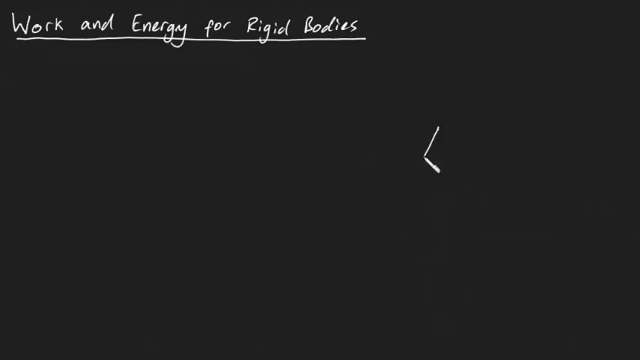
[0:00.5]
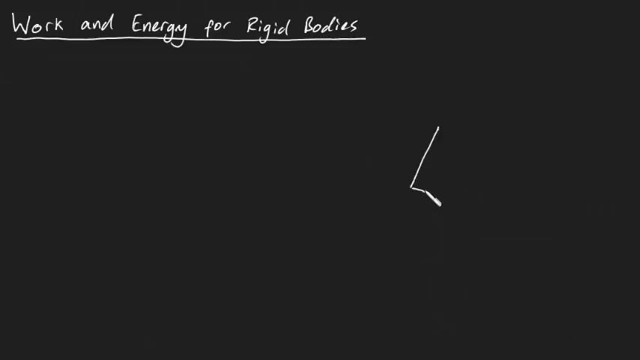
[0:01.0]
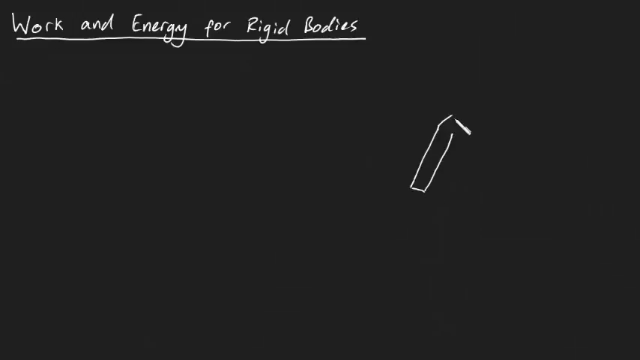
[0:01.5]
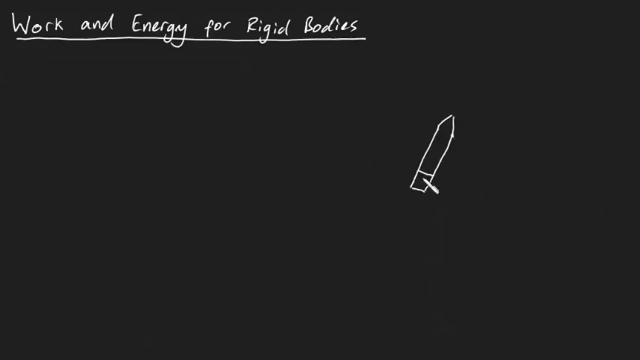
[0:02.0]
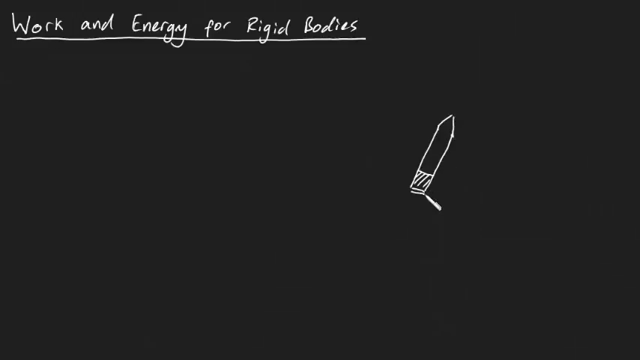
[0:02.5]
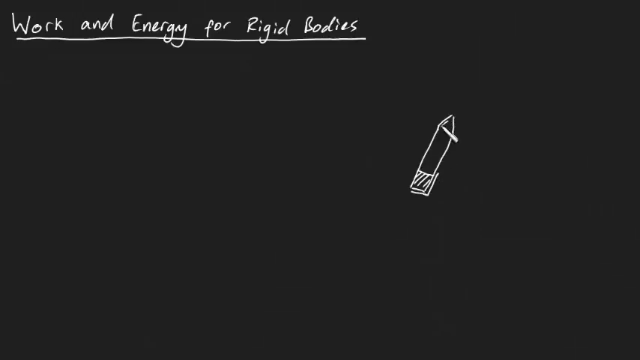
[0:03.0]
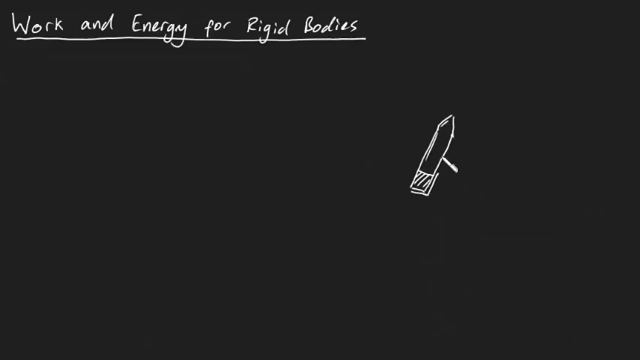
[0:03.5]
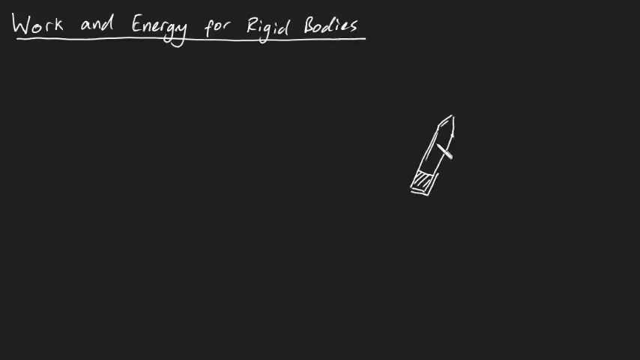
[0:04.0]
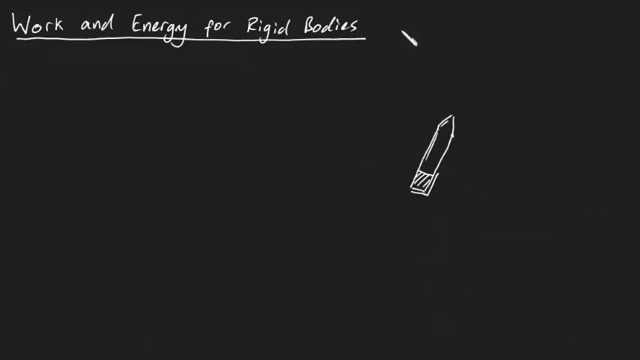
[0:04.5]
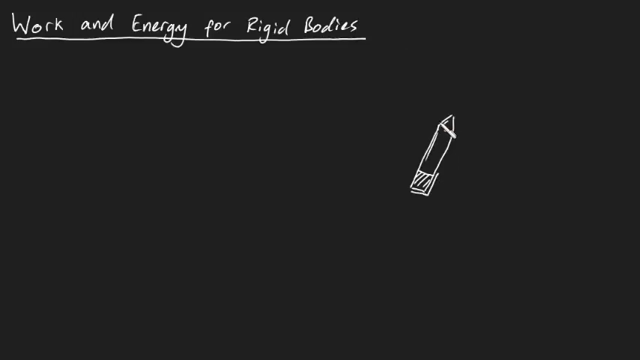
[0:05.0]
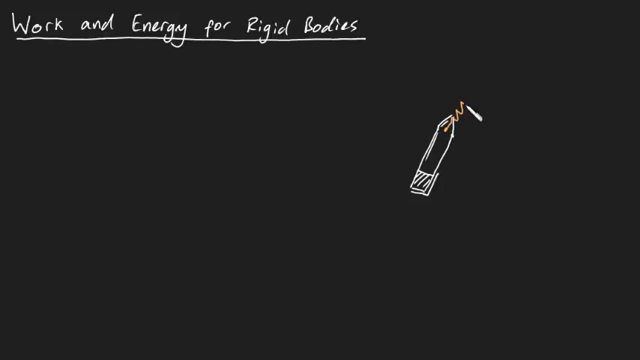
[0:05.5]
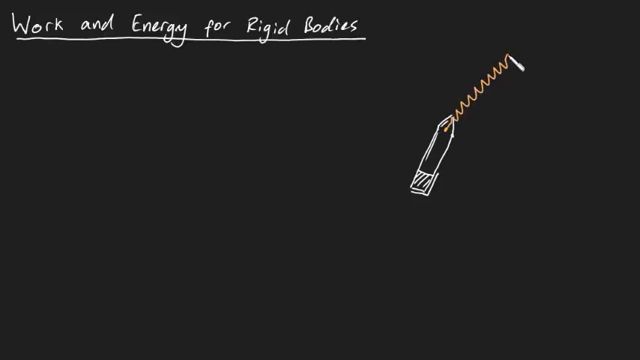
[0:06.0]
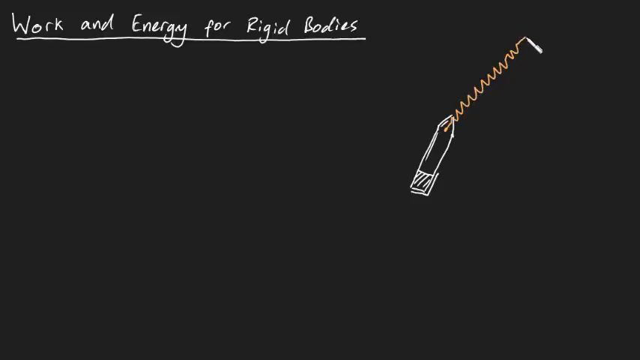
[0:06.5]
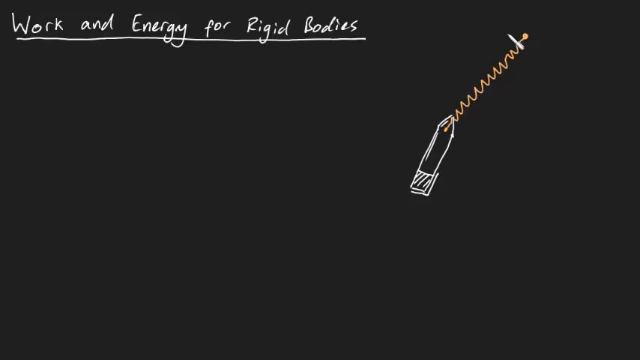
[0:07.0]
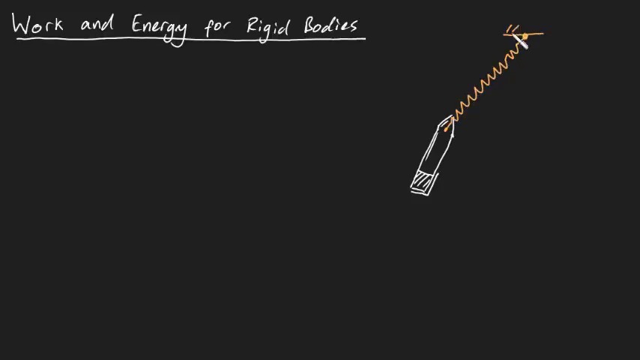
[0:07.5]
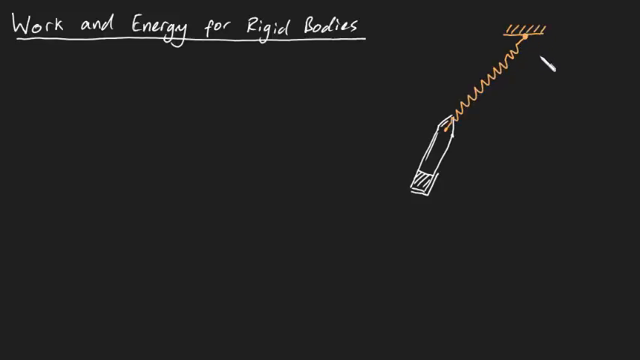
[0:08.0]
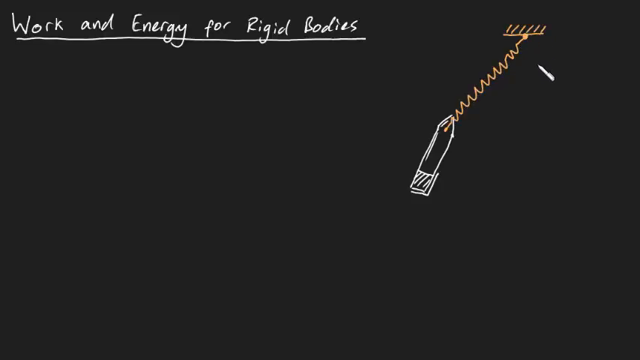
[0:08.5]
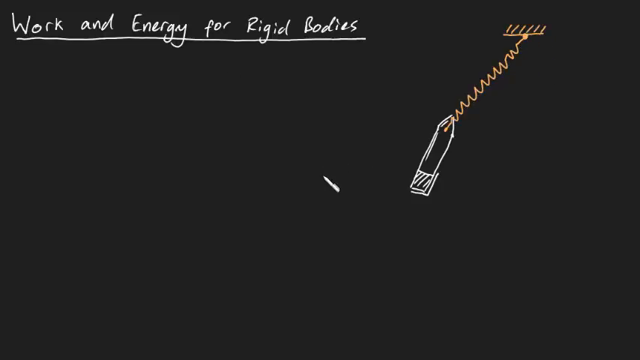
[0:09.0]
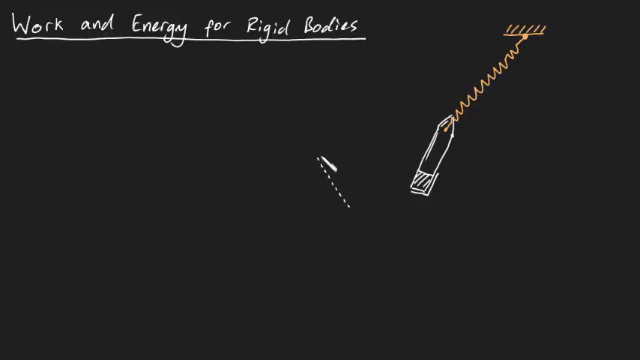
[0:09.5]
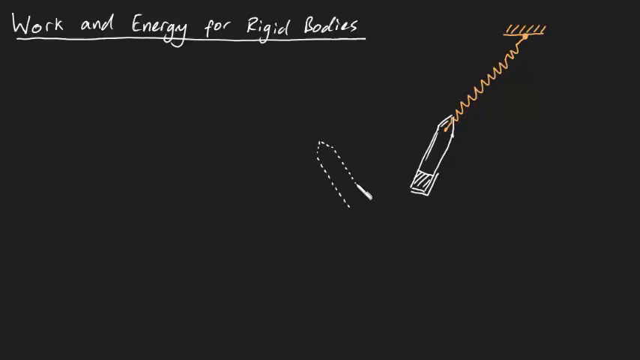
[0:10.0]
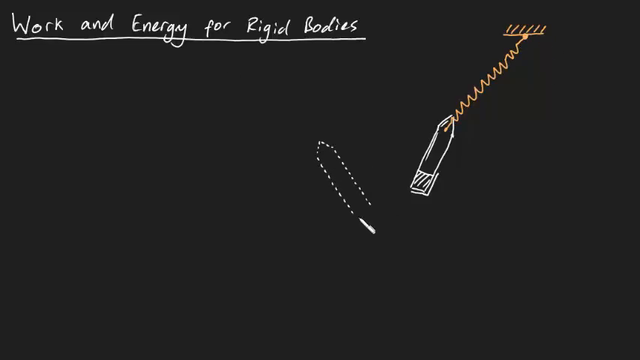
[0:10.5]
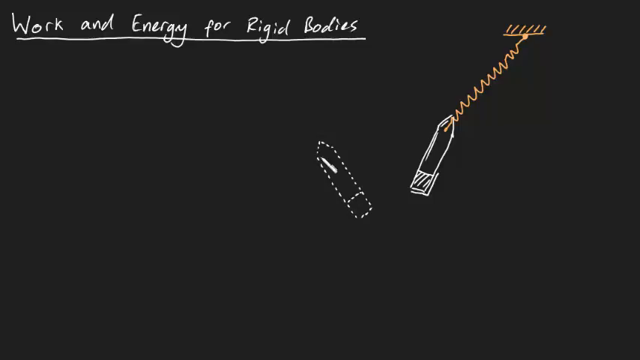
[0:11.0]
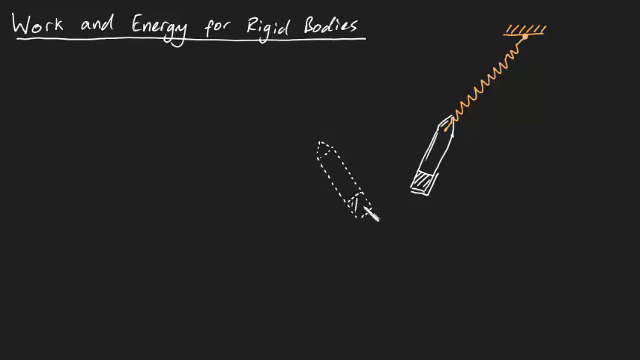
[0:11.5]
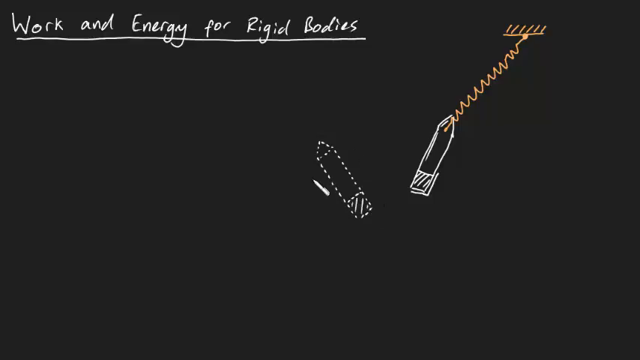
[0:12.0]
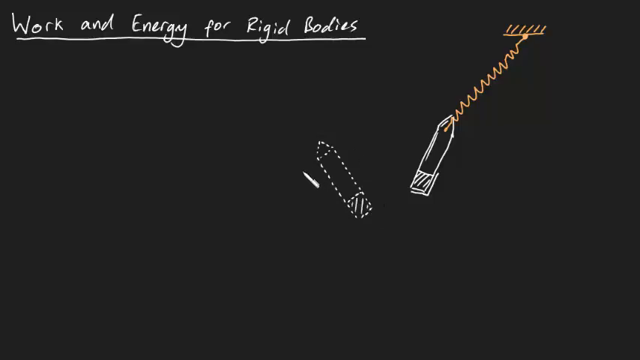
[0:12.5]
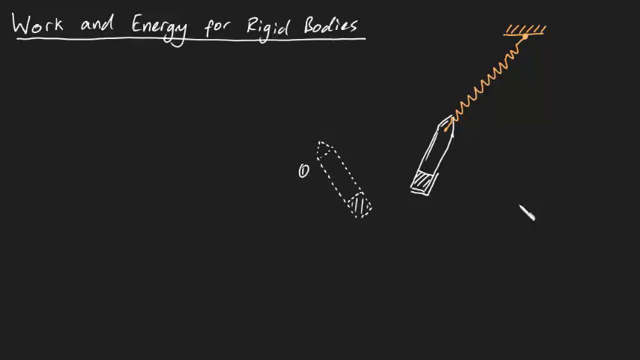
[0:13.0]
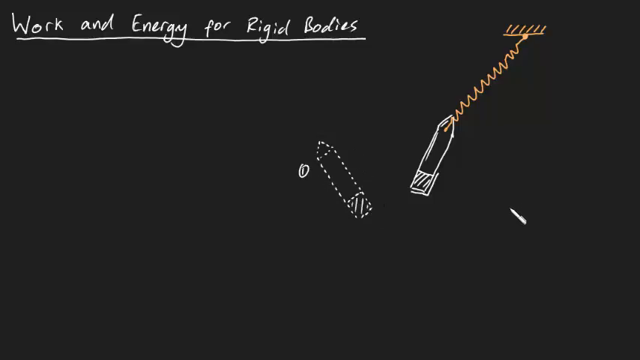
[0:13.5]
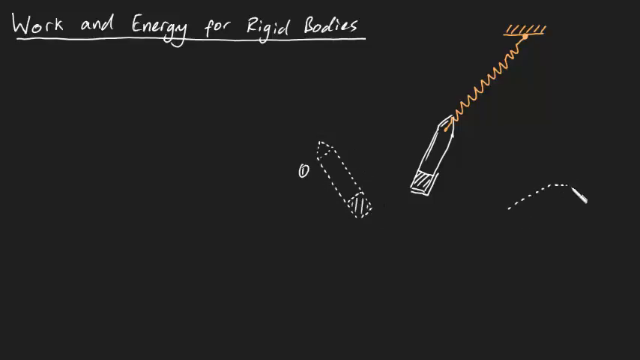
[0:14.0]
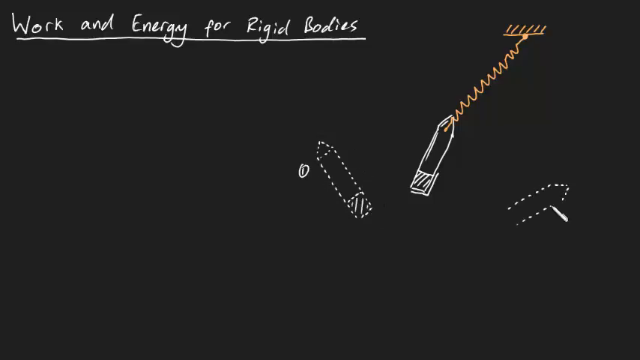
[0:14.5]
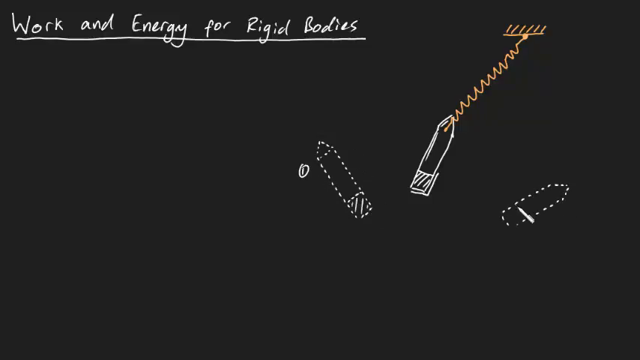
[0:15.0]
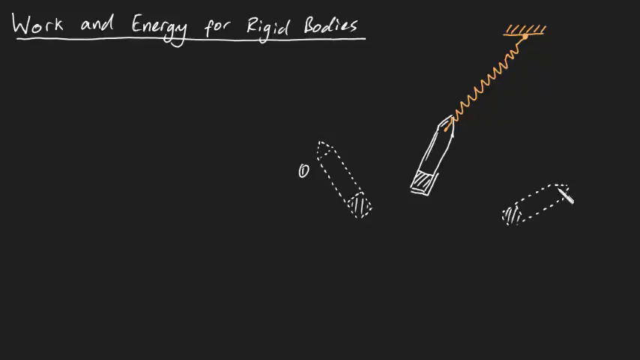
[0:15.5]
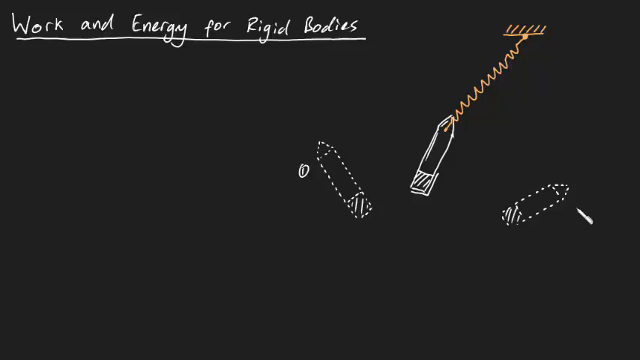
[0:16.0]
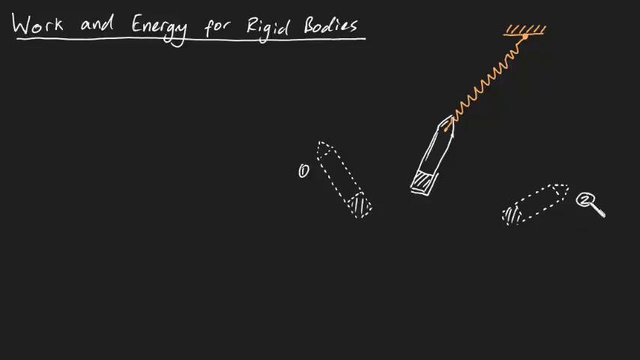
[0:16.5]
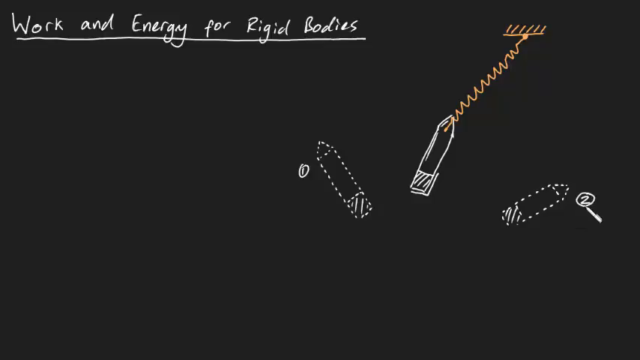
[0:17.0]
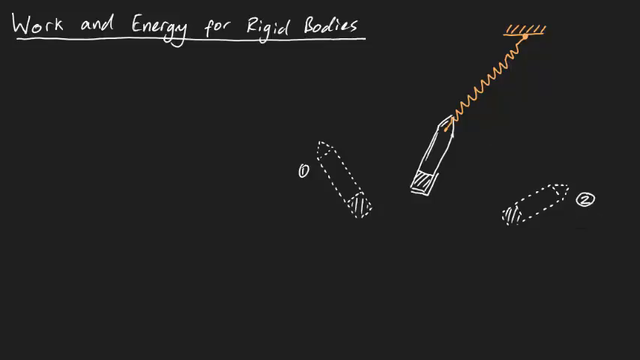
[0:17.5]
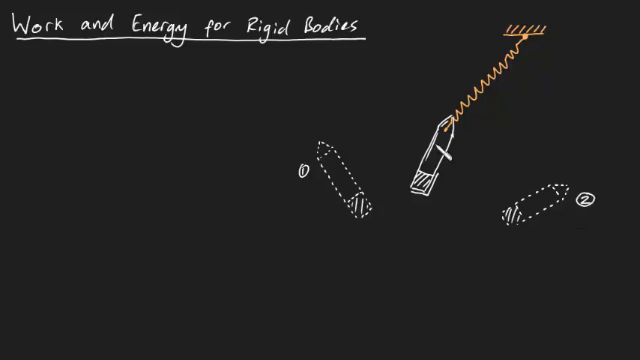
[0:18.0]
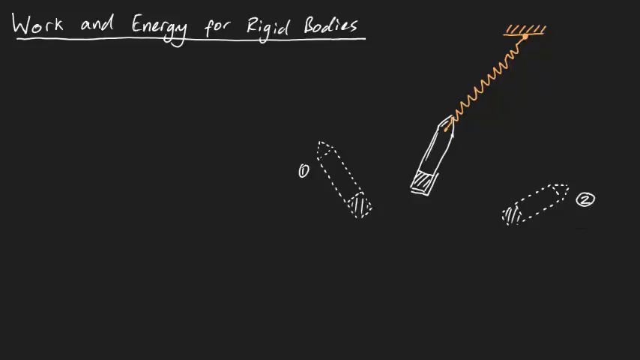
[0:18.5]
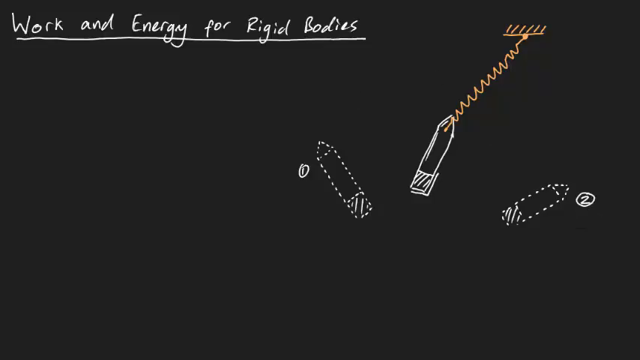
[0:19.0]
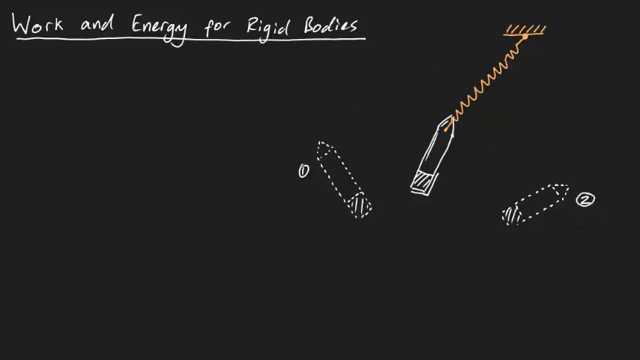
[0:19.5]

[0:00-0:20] A white cursor moves very quickly, drawing what looks like a projectile or stylized object connected to a pin by an elastic that looks like a spring. At the top left, on a black background, there is white text underlined in white. The cursor then draws two alternative positions of the object, marked with the numbers 1 and 2, both circled. Although the cursor moves very fast, its movement is fluid and easy to follow. The object, the spring and the elastic holding it are drawn in two colors, white and orange. Right after drawing the object, the elastic holding it, and its two alternative positions, the cursor quickly disappears from the screen.